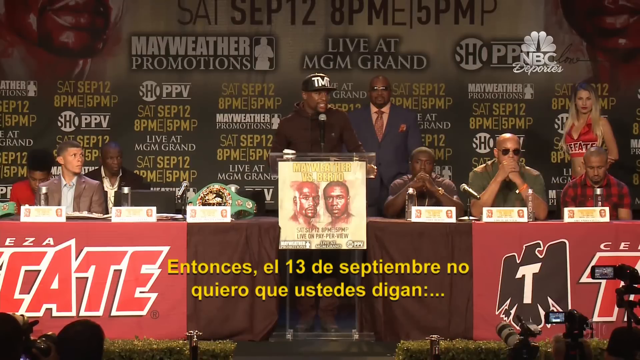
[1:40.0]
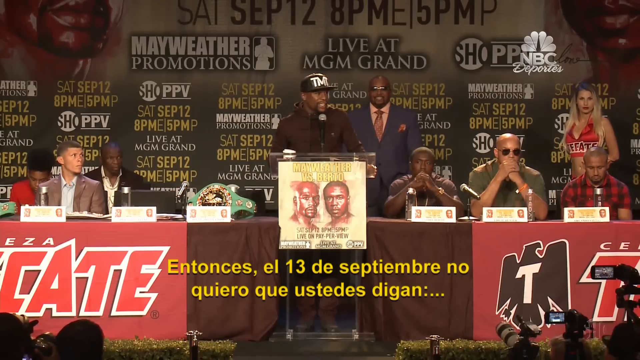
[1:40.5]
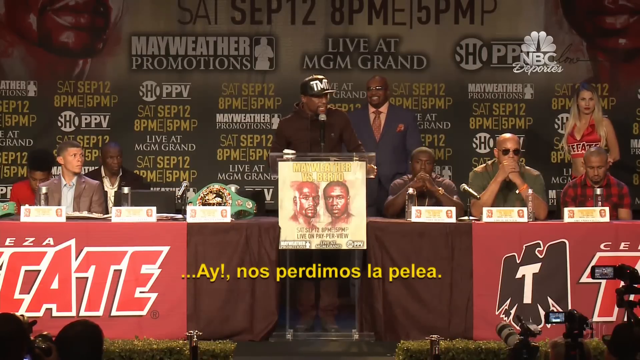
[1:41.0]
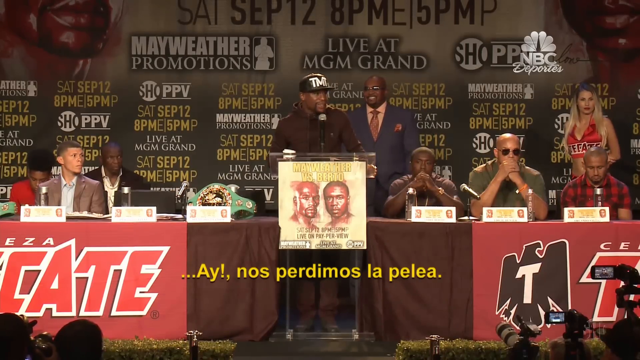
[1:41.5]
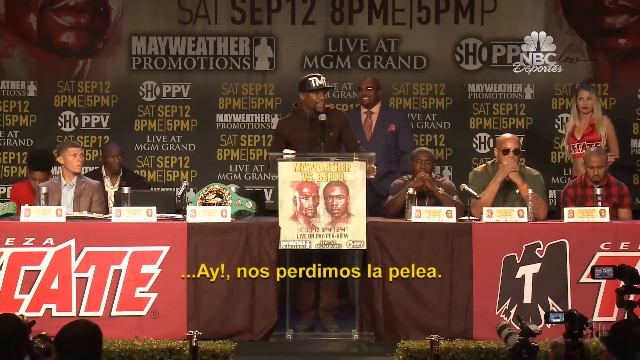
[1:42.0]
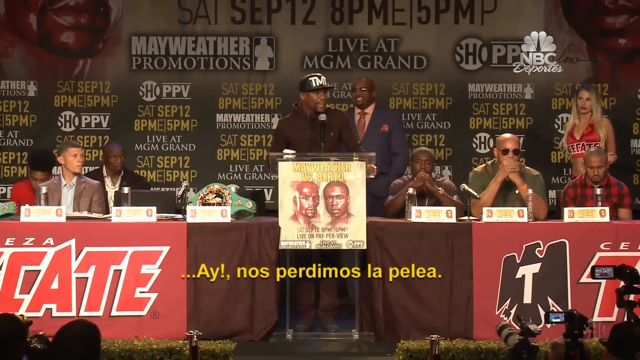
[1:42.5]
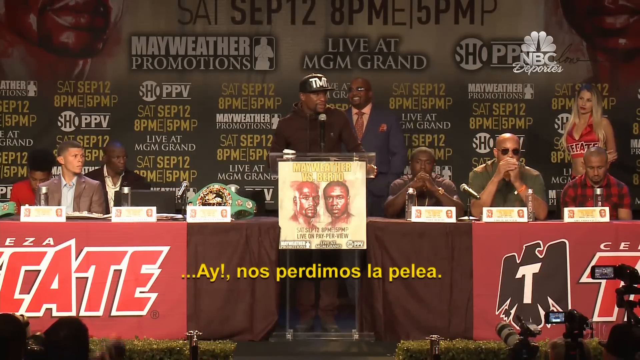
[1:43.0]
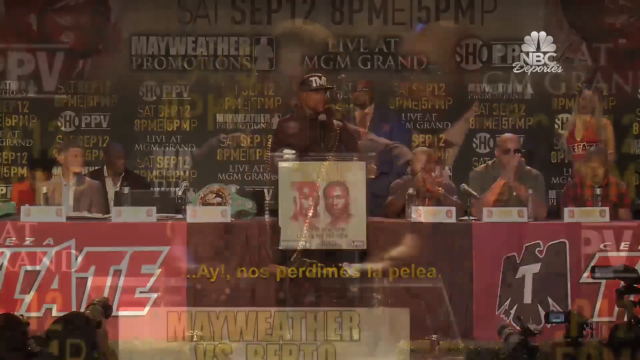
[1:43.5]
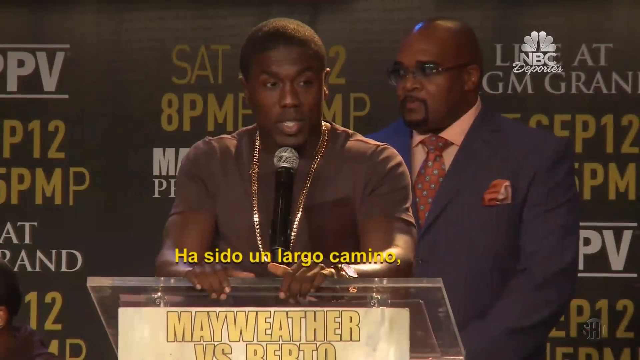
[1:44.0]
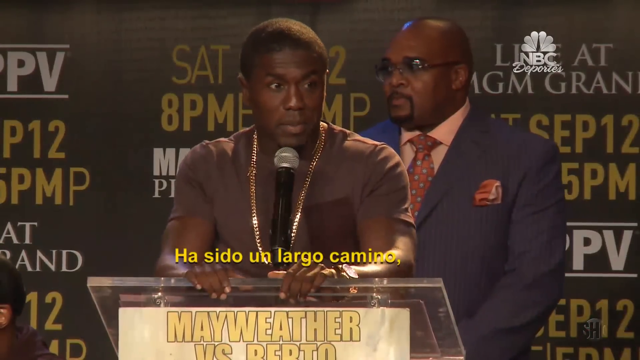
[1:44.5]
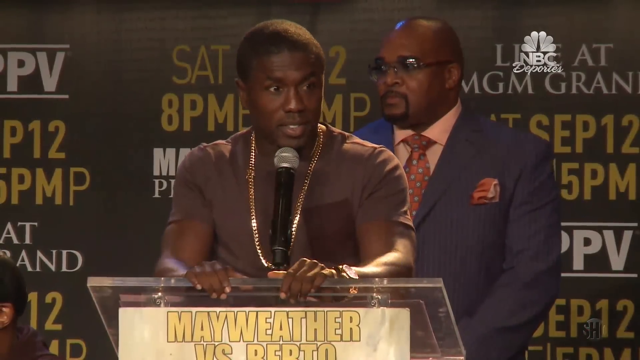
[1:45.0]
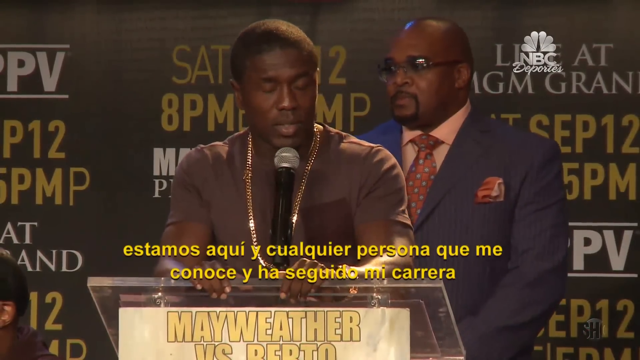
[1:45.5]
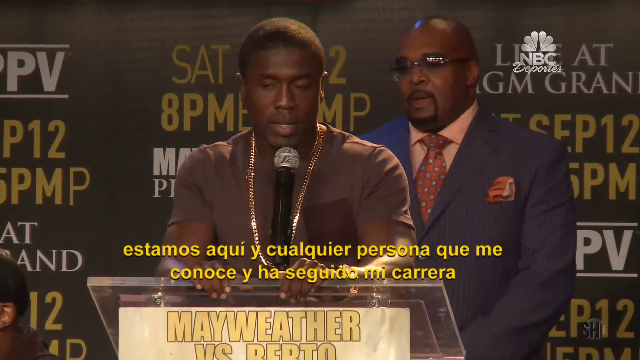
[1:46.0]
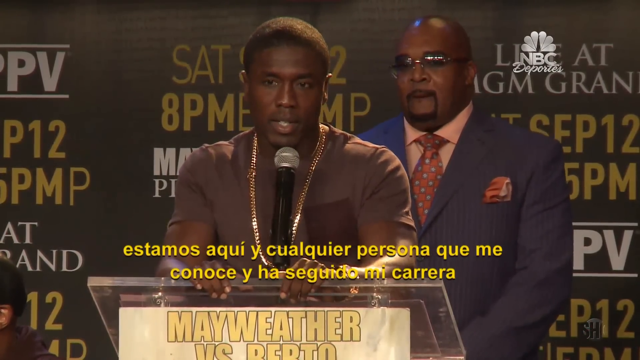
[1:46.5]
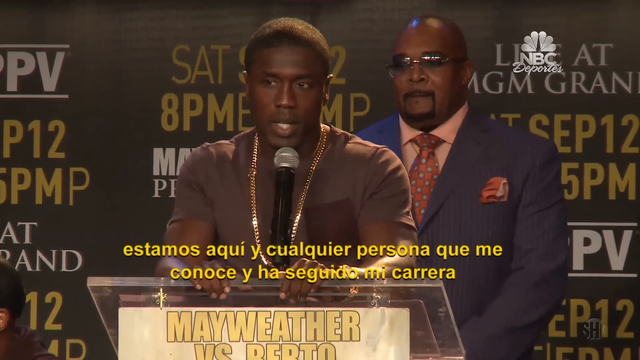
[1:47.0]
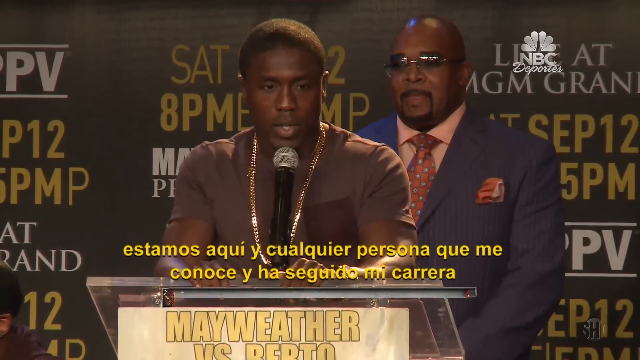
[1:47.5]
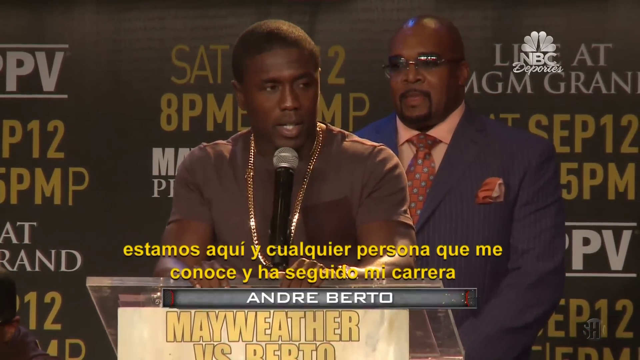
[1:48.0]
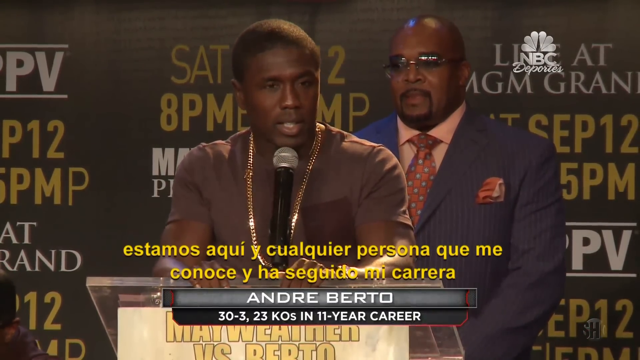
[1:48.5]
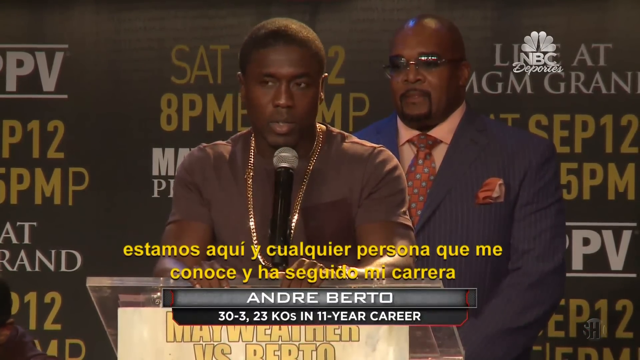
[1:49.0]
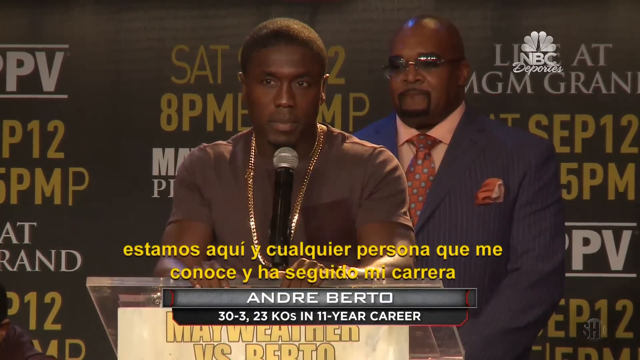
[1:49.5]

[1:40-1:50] Floyd Mayweather speaks at the podium on a stage, facing the camera with his head tilted to his left-hand side. People sit at a table to the left of Floyd Mayweather, and two of them have their hands covering their mouths. The video then shows the other boxer in the main event, also speaking at the podium, in a different view. He looks to his left-hand side, with his left and right hands on the front of the podium.